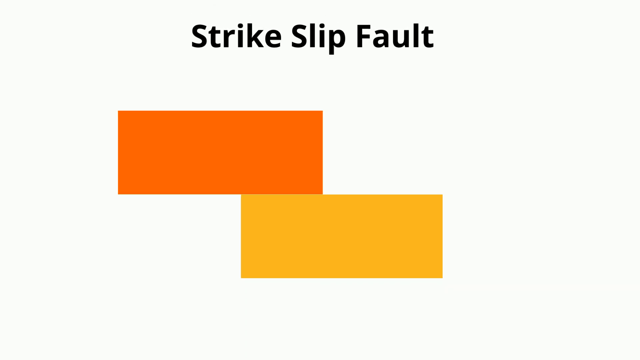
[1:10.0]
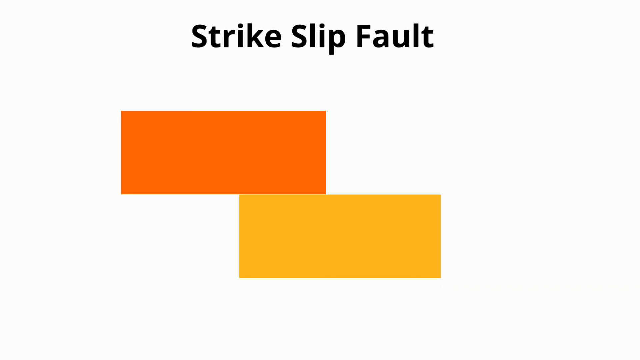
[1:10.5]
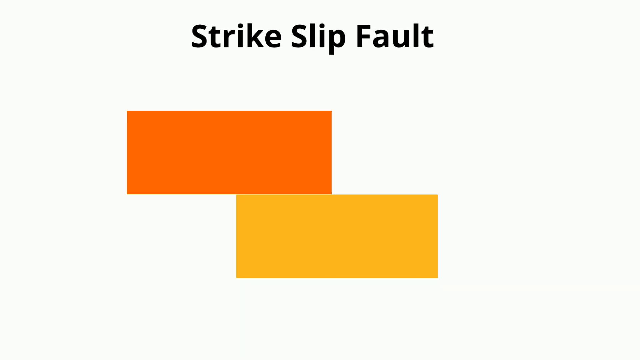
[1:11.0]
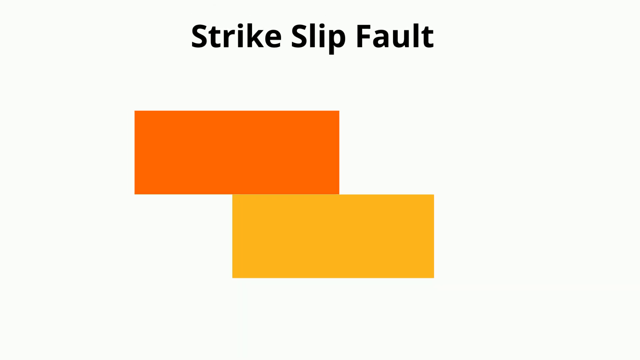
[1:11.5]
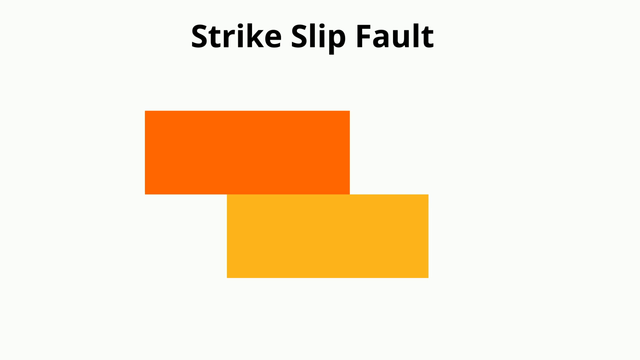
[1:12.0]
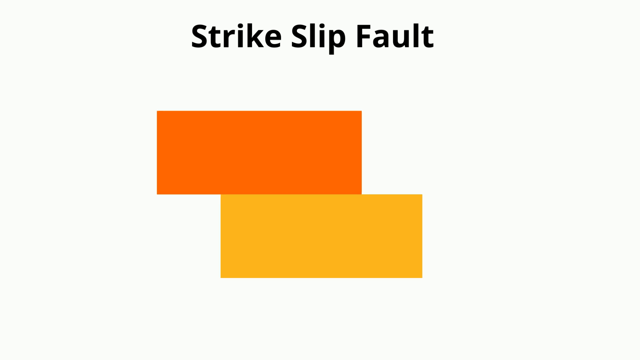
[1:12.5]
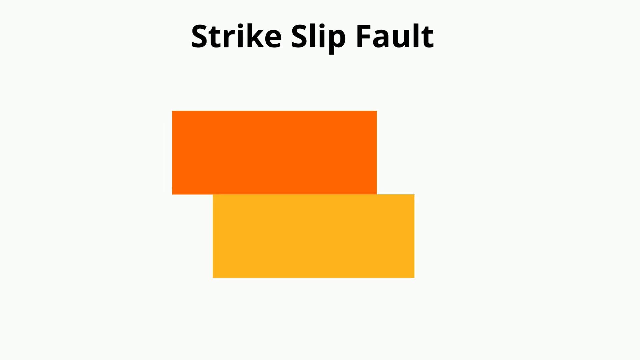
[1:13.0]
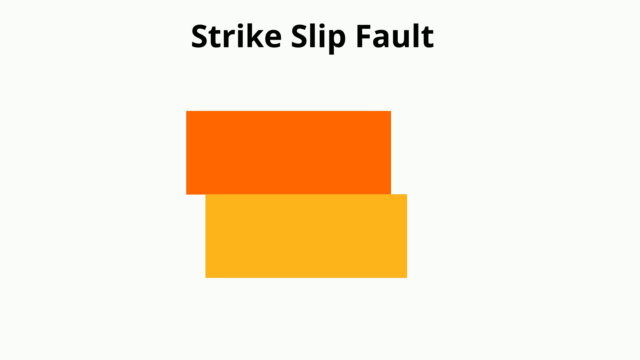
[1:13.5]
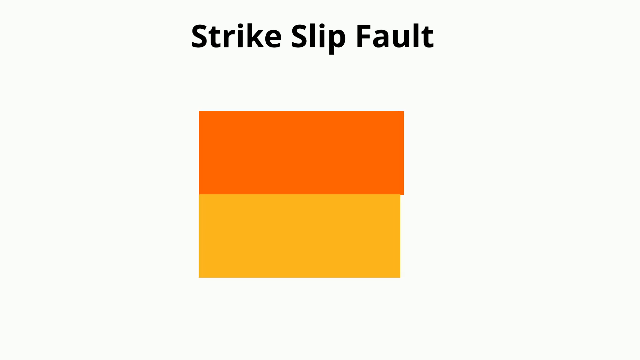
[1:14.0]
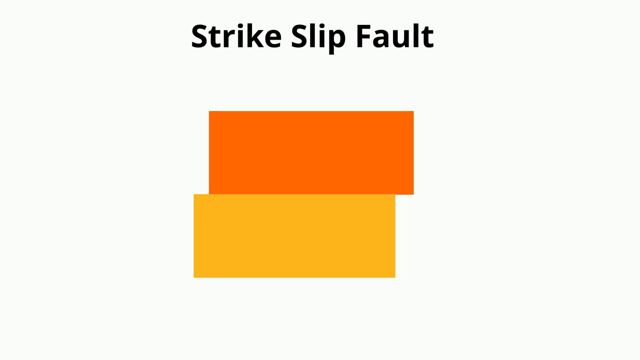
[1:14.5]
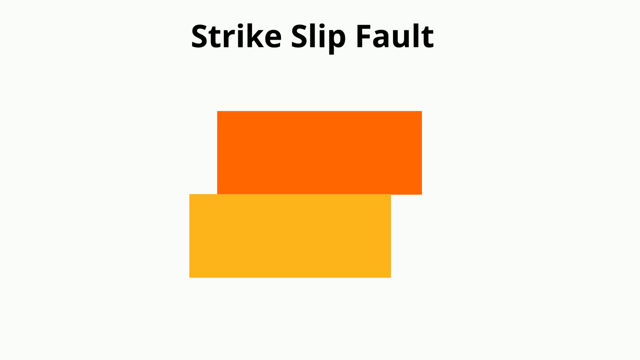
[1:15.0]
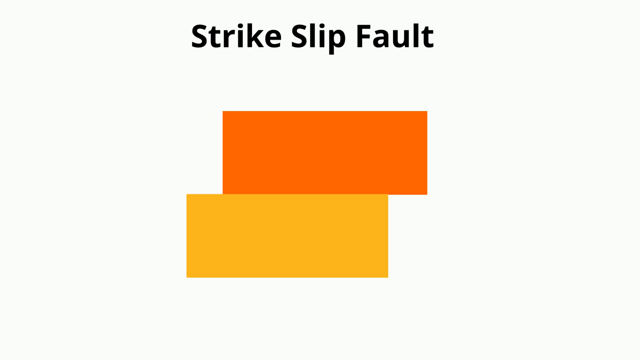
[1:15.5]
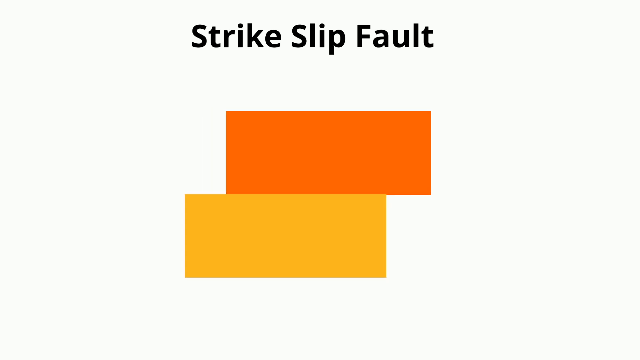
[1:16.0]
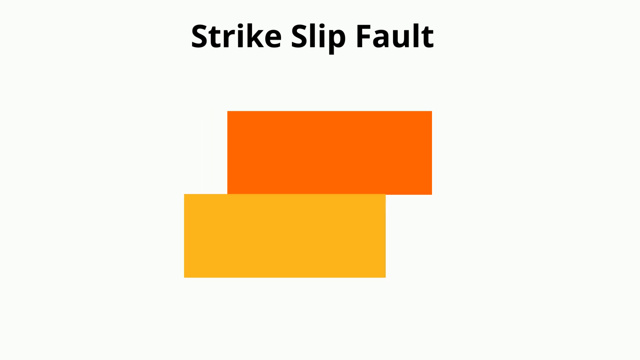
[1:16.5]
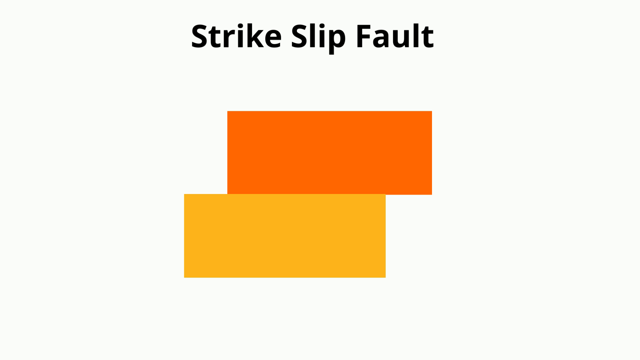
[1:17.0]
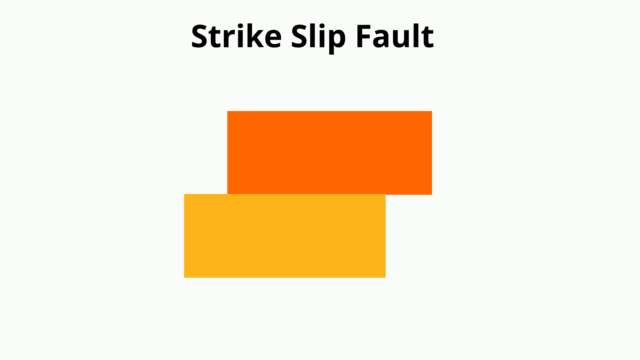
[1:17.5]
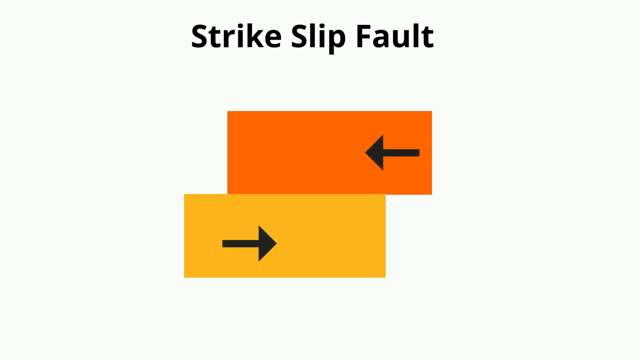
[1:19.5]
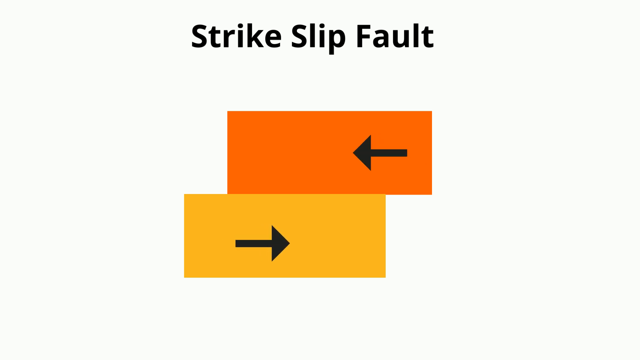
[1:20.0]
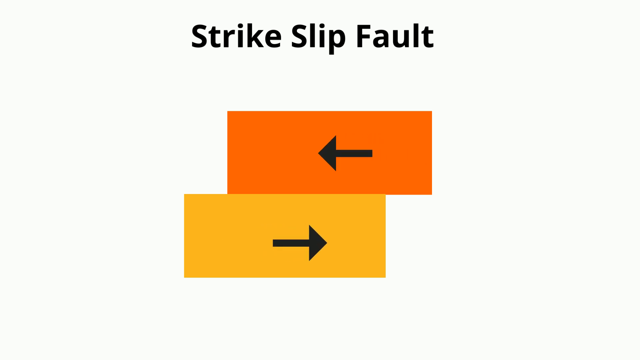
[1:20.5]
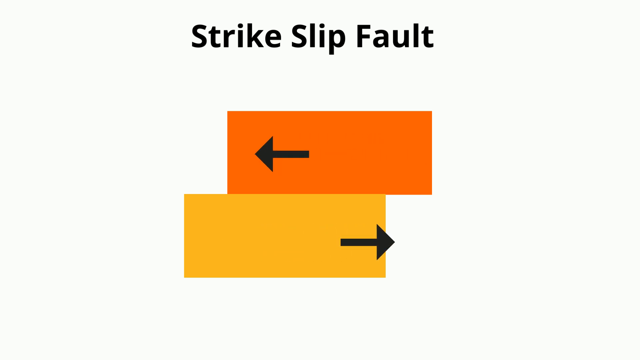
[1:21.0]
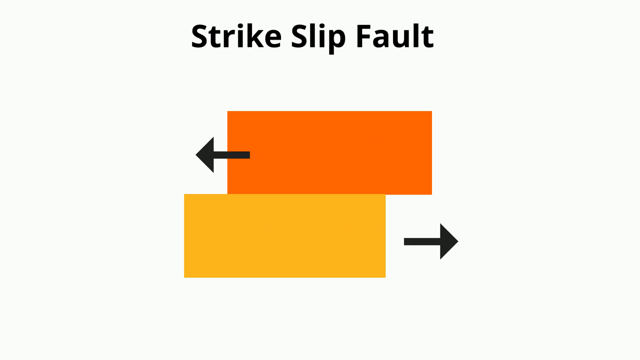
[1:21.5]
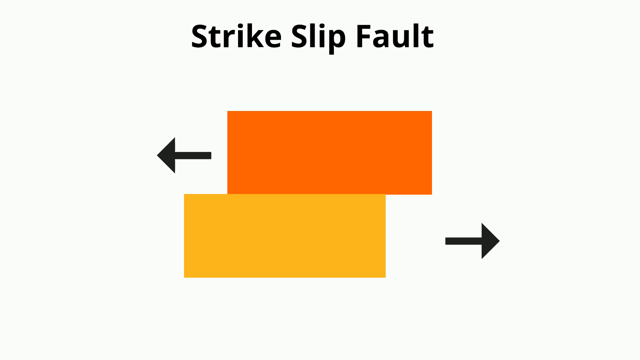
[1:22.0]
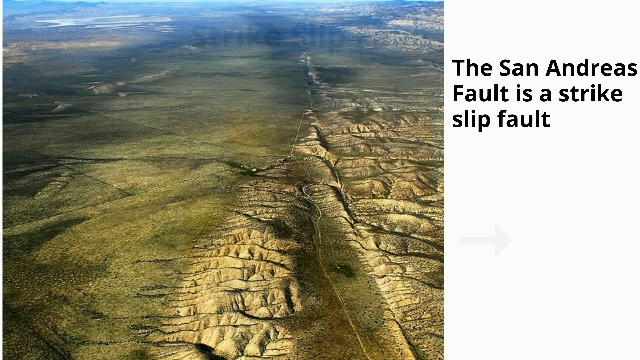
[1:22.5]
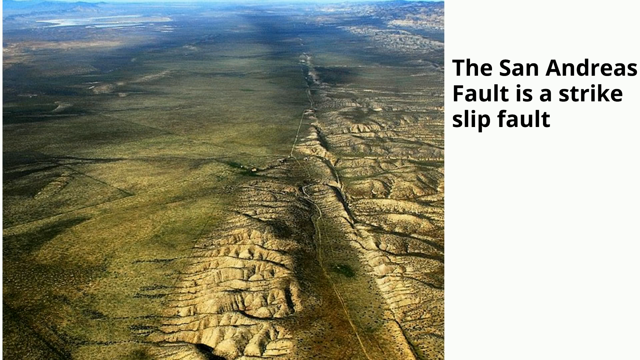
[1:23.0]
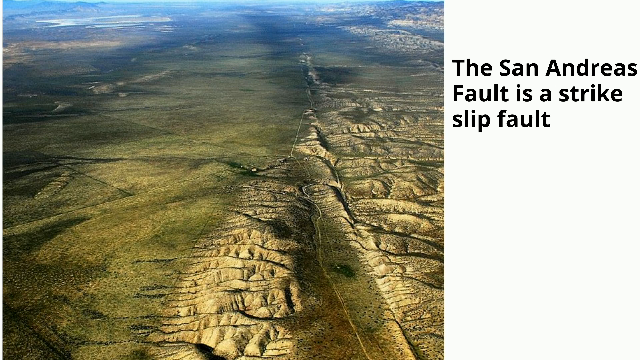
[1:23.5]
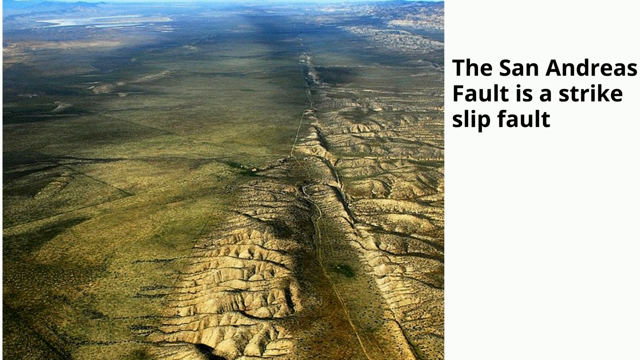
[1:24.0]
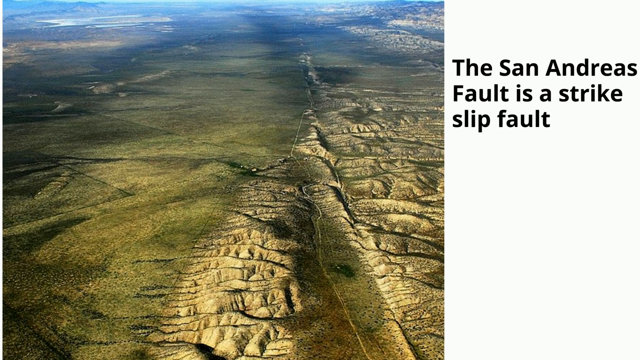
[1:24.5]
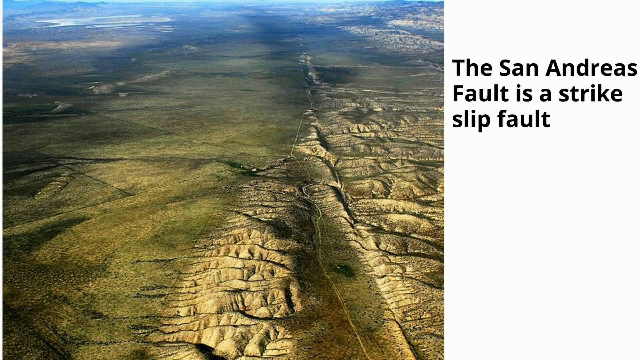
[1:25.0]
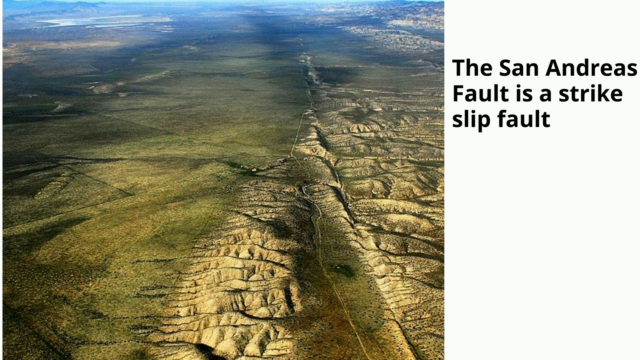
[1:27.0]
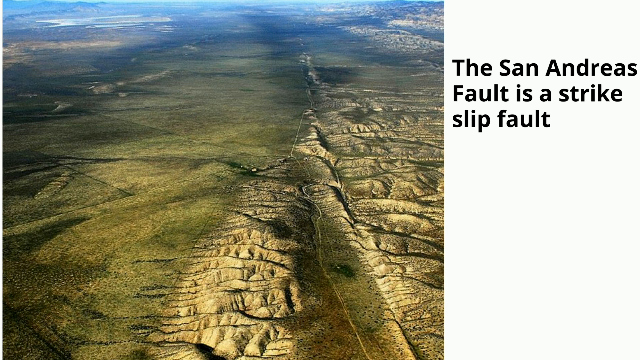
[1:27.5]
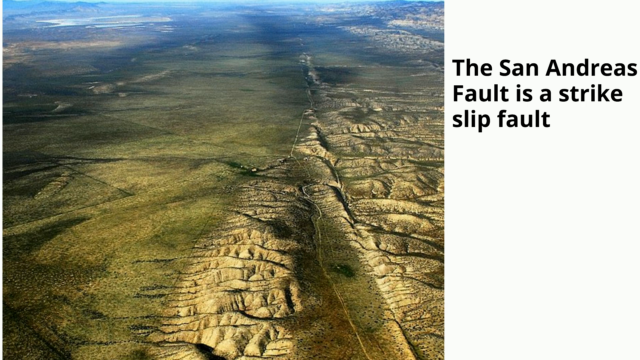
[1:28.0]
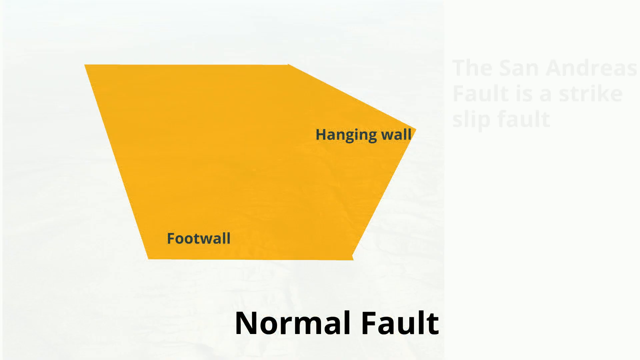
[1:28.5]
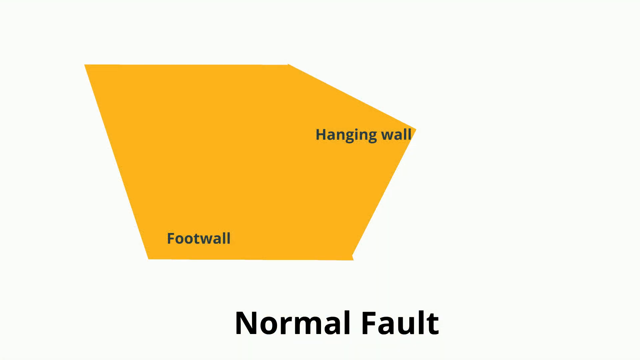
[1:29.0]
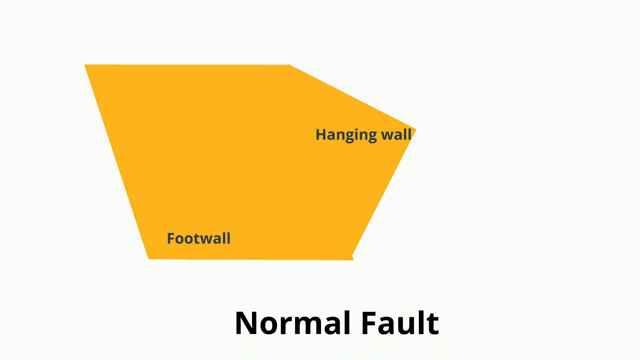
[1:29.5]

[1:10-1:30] A planet appears, then is shown with goldish lines as the continents start to separate, and the African continent is shown very prominently. In an office setting, a white man who appears to be in his 20s breaks a yellow pencil. Different types of rocks and their faults follow, then a few illustrations of the types of faults: the normal fault, the reverse fault, and the strike-slip fault, each shown individually. For the reverse fault, different mountains show the fault, and the San Andreas fault is shown as an example of a strike-slip fault. At the end, a cartoon illustration thanks the viewer for watching and encourages them to share and subscribe.